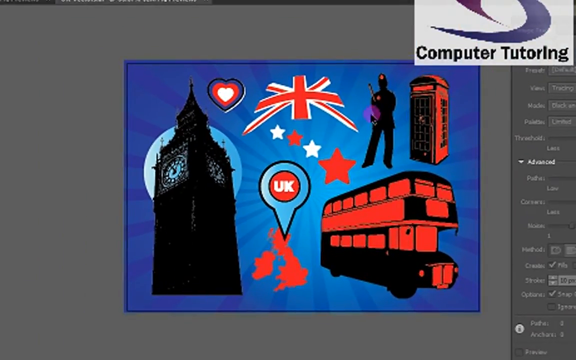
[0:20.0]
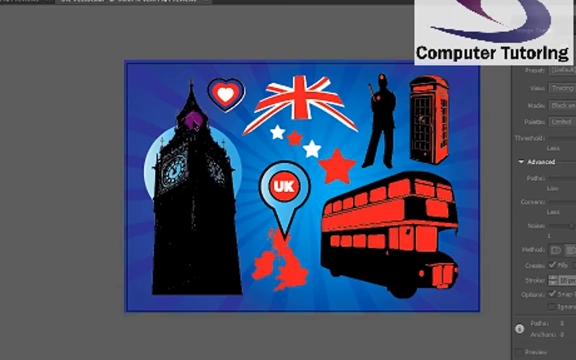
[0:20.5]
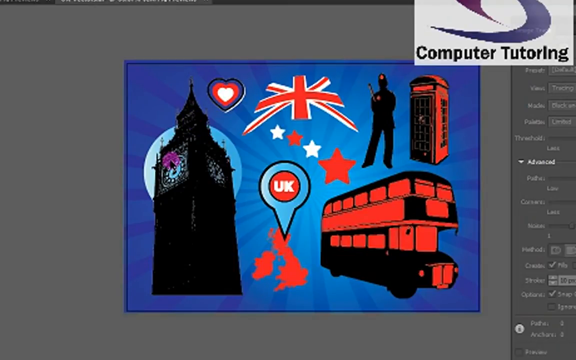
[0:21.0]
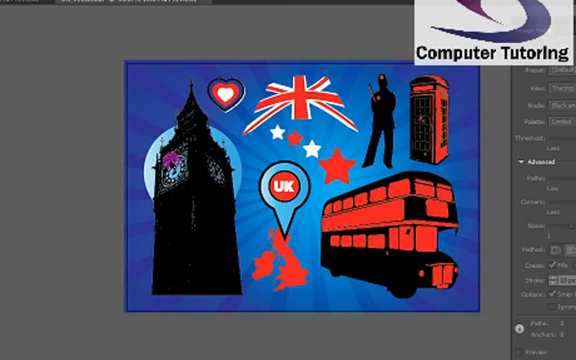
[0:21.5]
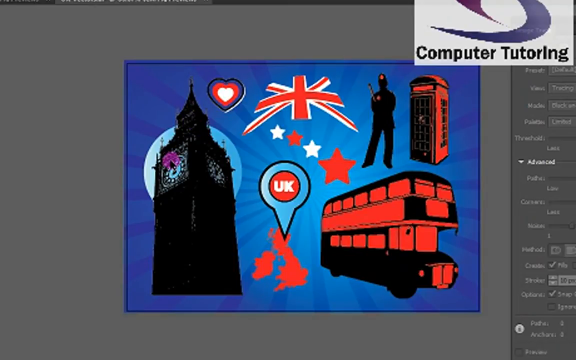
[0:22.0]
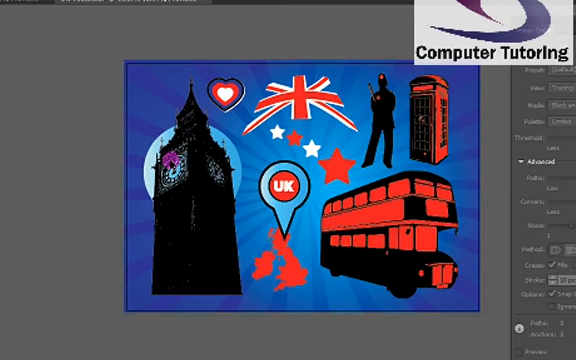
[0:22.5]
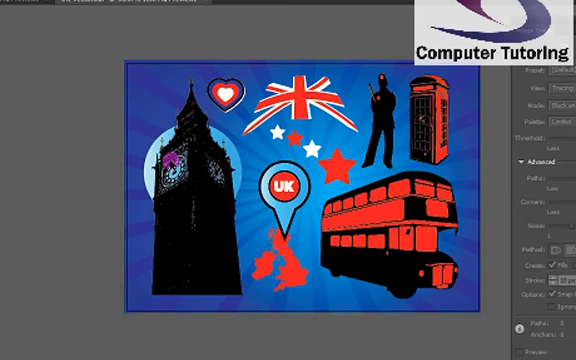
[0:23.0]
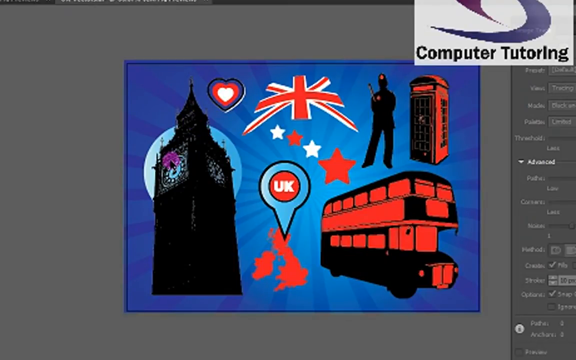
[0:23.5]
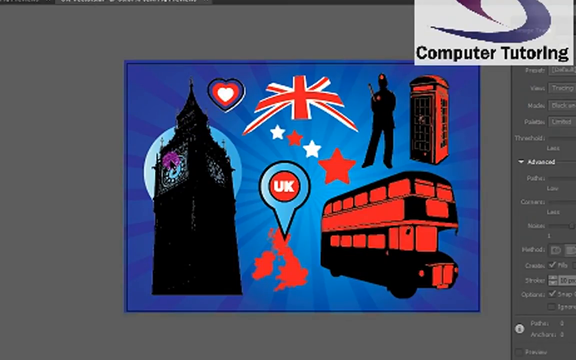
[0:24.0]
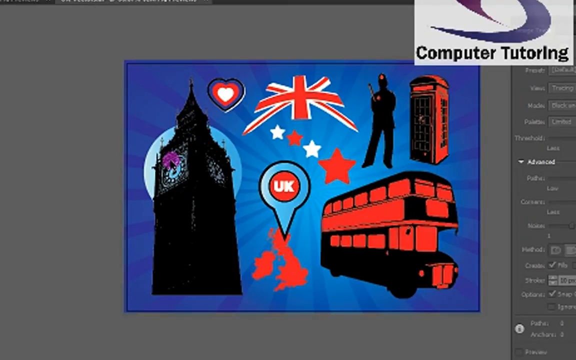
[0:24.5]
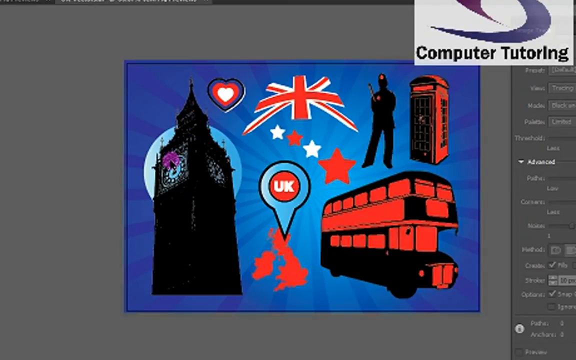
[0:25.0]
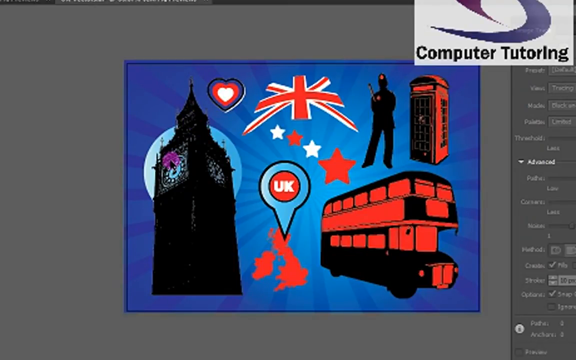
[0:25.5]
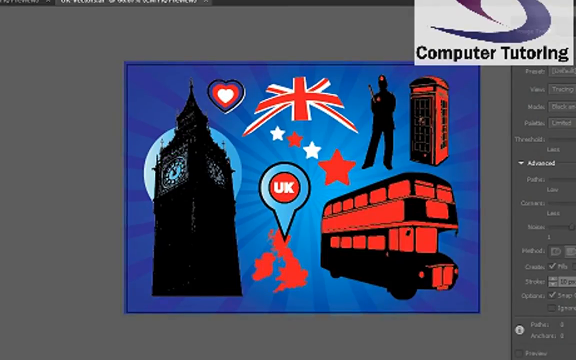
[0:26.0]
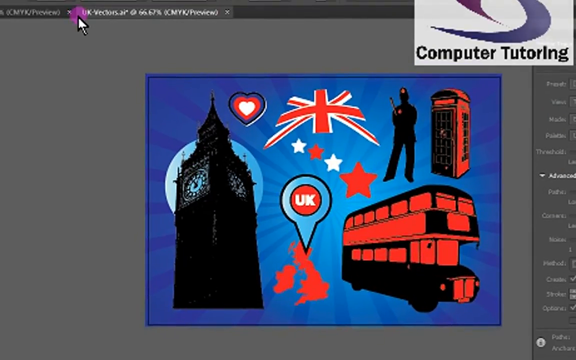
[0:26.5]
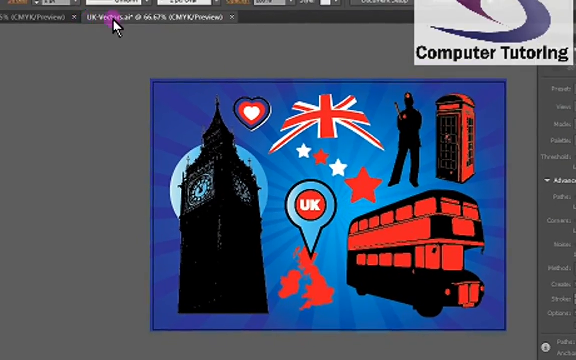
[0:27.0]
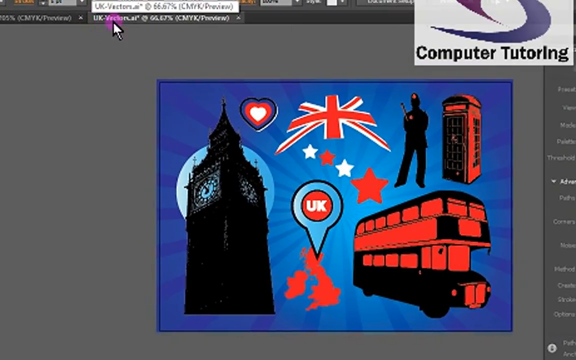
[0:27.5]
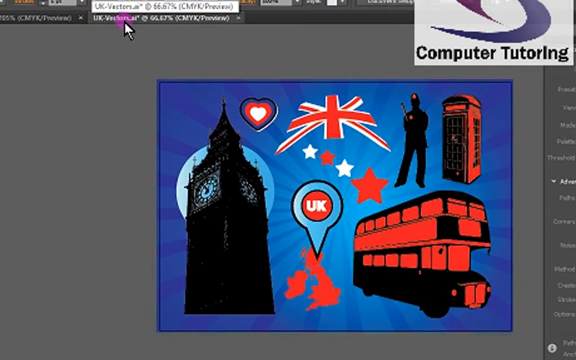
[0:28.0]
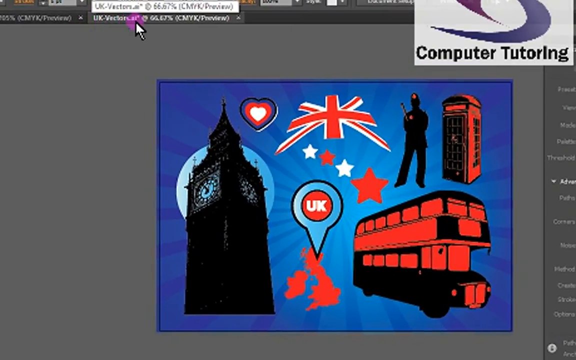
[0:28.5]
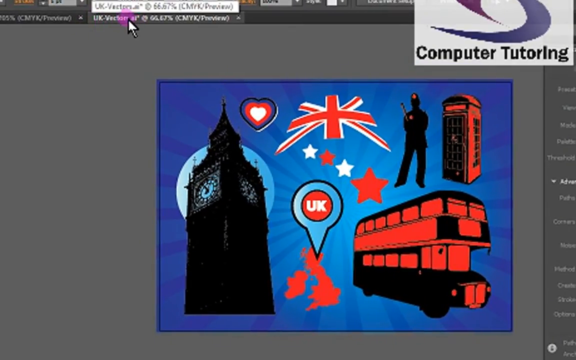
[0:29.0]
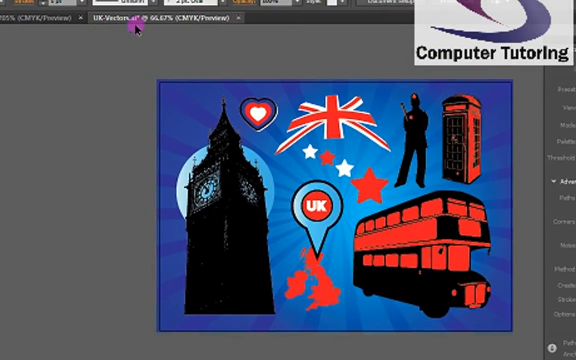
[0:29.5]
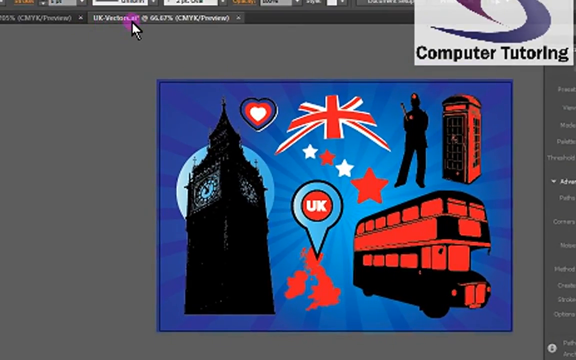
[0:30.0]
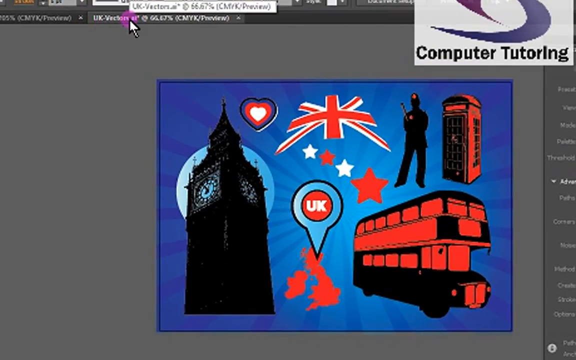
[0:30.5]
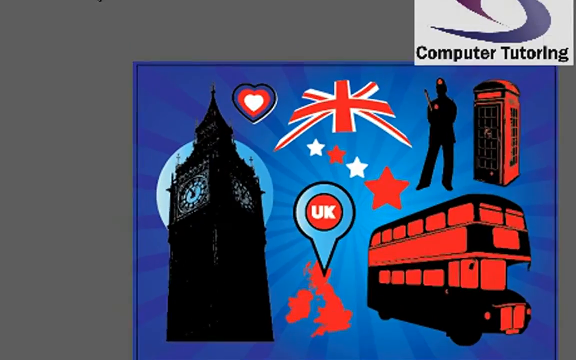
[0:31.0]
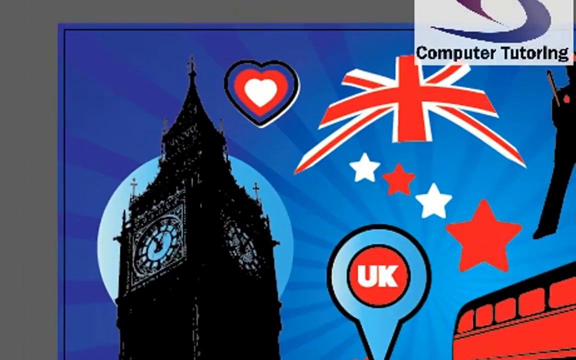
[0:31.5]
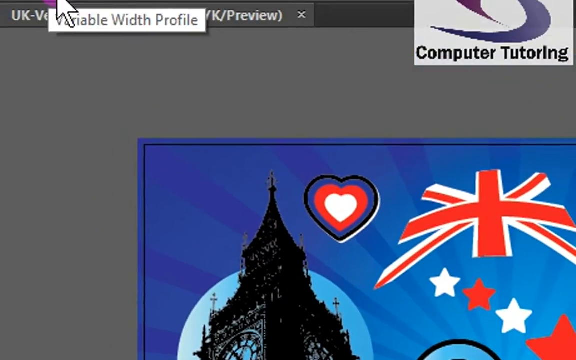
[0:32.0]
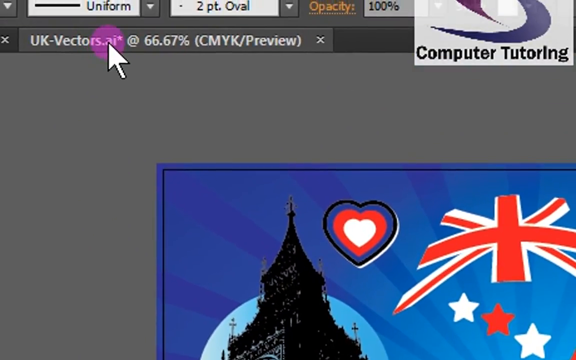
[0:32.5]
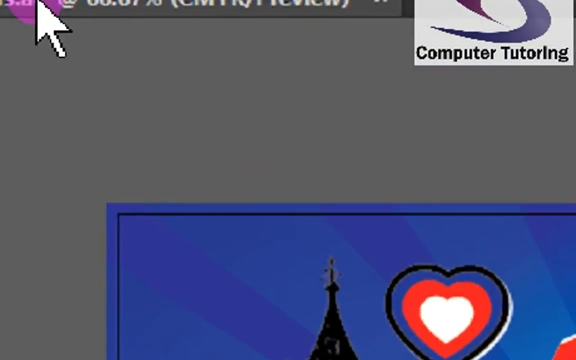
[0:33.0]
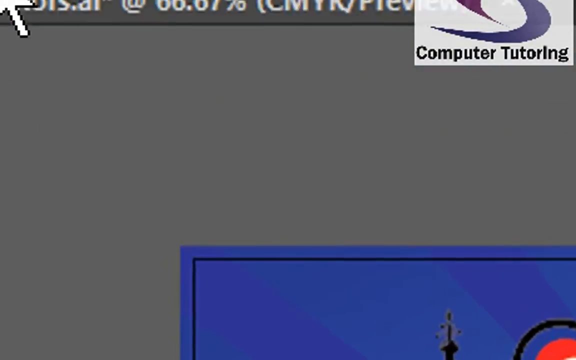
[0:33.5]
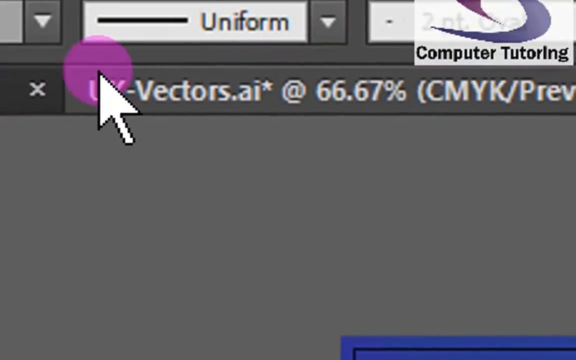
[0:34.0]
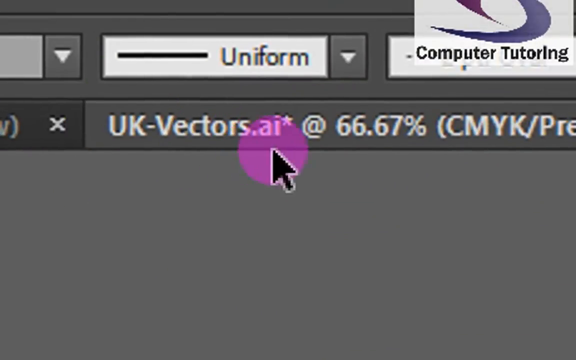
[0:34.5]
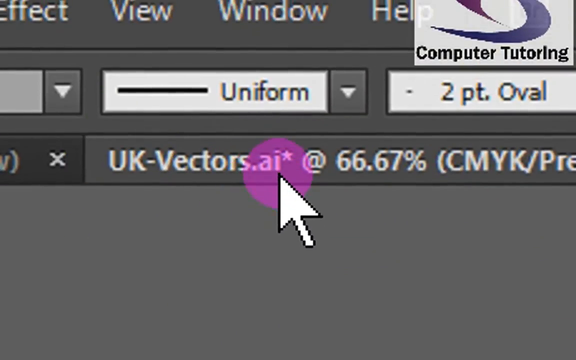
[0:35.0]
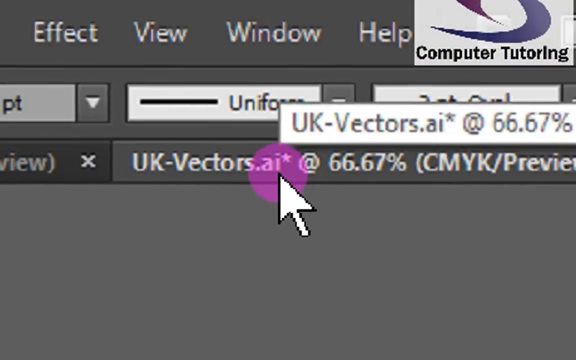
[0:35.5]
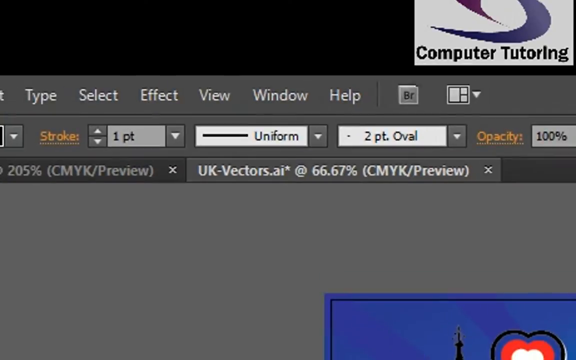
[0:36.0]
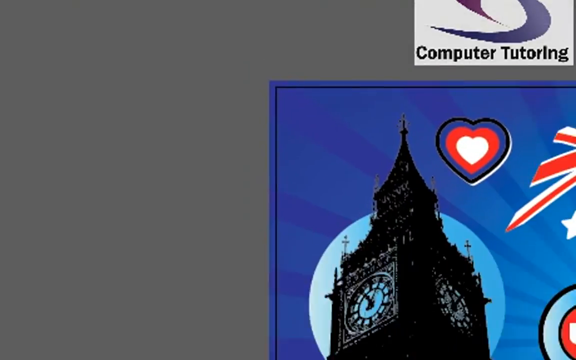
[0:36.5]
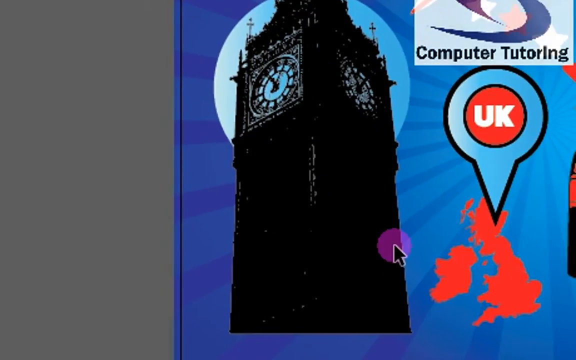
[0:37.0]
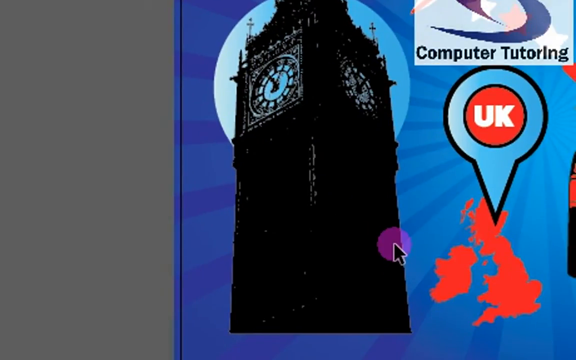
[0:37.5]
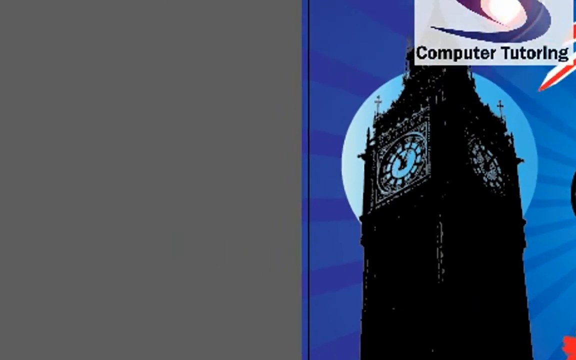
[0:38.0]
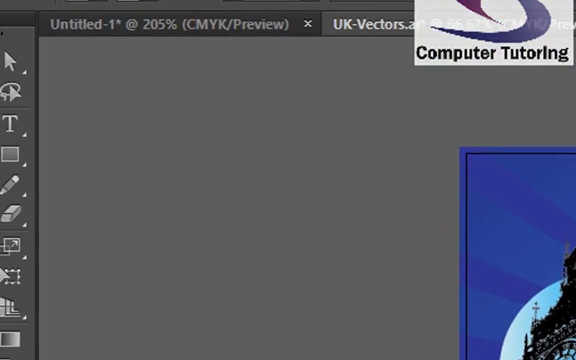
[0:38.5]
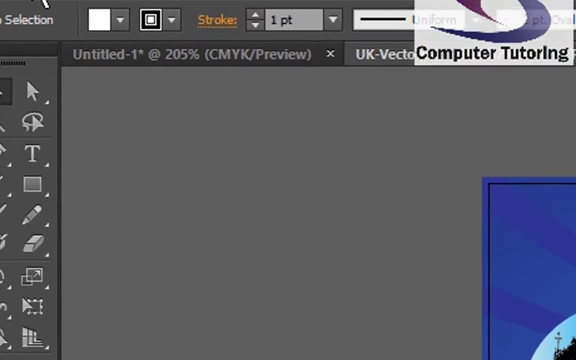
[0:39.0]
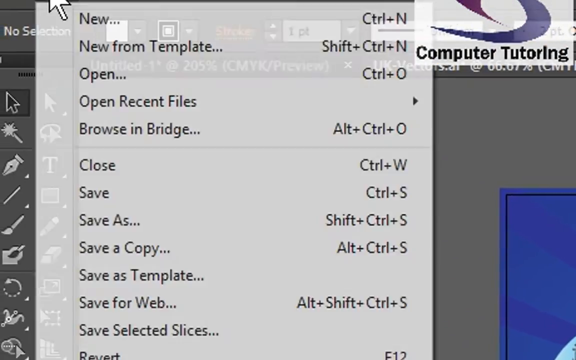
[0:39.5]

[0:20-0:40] A computer training video shows a file open on a picture. On the left is Big Ben in black, blue and gray, with a blue circle behind it. To the right at the top is a heart with a black outline, red, and white in the middle. Then come a Union Jack and a figure that is more like a bobby than a soldier, apparently carrying a bagpipe, and a red phone box. Four stars come out from the Union Jack, white, red, white, red. Below that is a red map of the UK with all of Ireland highlighted, and a location map icon, a circle with a pointy part, pointing on Scotland. In the middle, "UK" appears in white letters in a red circle. There is also a red and black double-decker bus. The cursor then goes up to the top and clicks on a tab containing a lot of words, which reads "uk vector.ai at 67.67 percent".